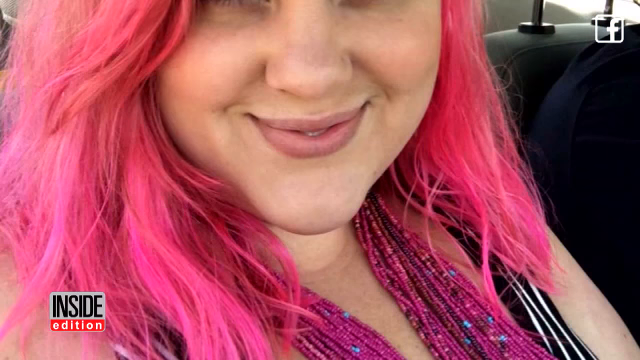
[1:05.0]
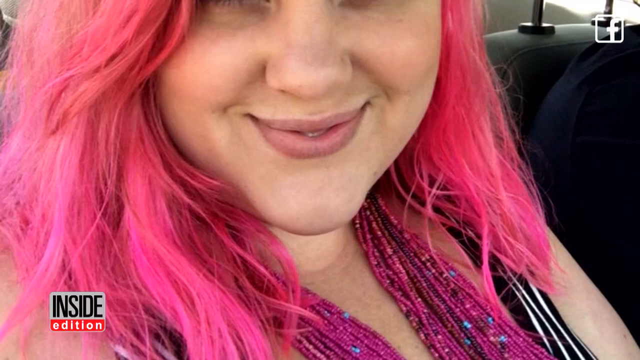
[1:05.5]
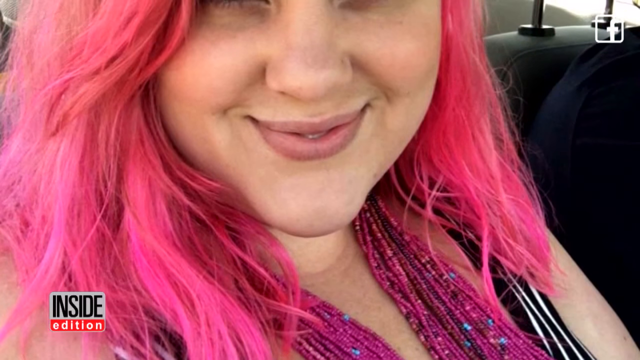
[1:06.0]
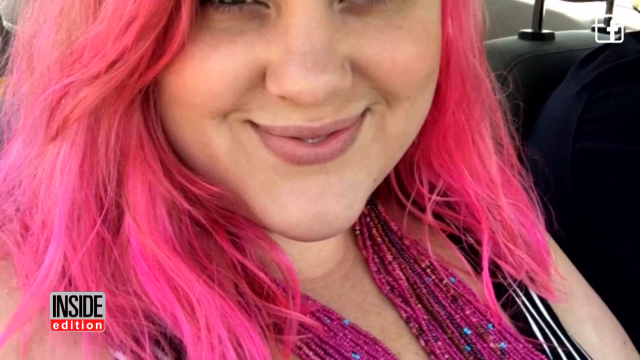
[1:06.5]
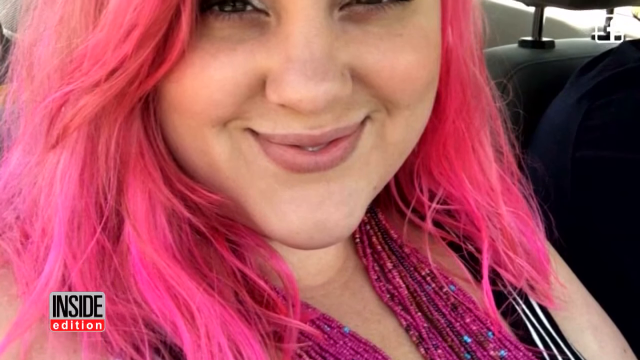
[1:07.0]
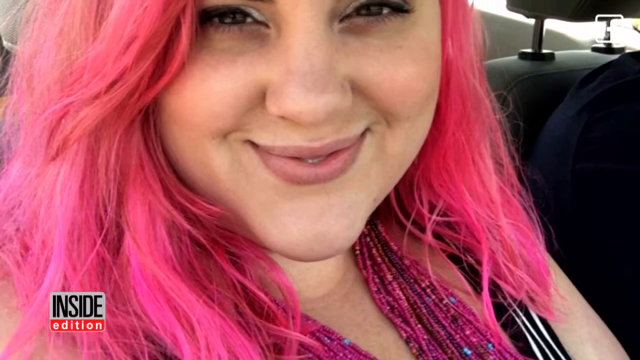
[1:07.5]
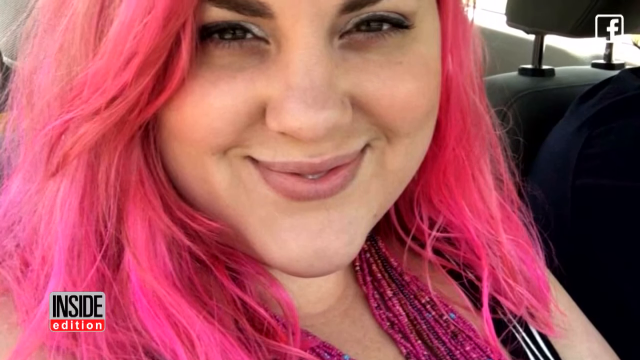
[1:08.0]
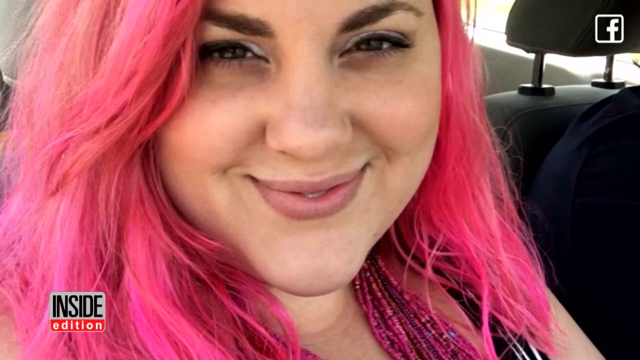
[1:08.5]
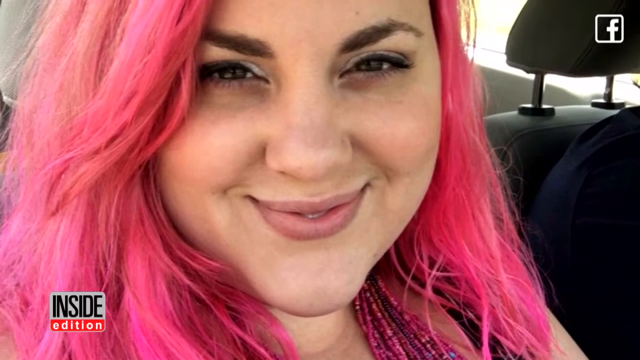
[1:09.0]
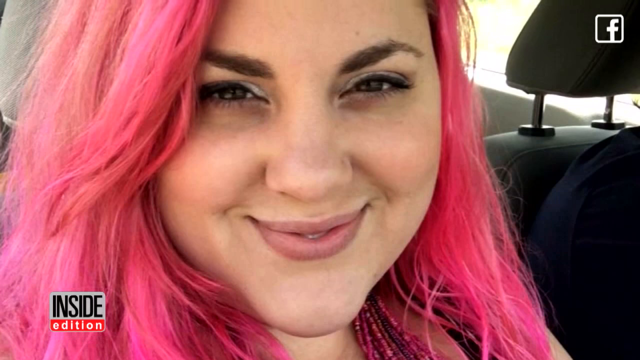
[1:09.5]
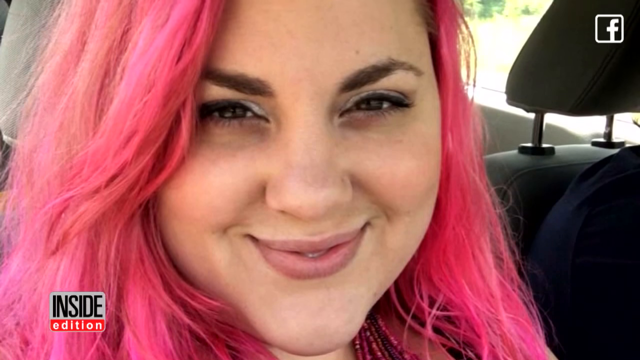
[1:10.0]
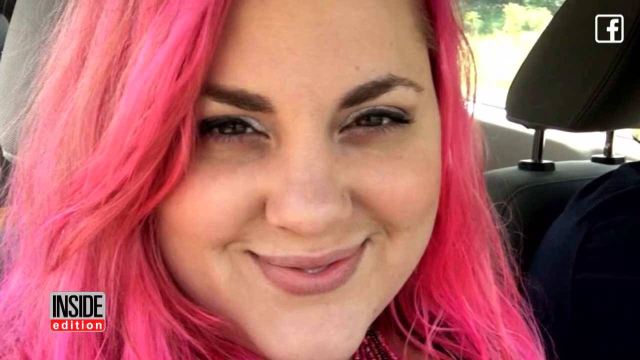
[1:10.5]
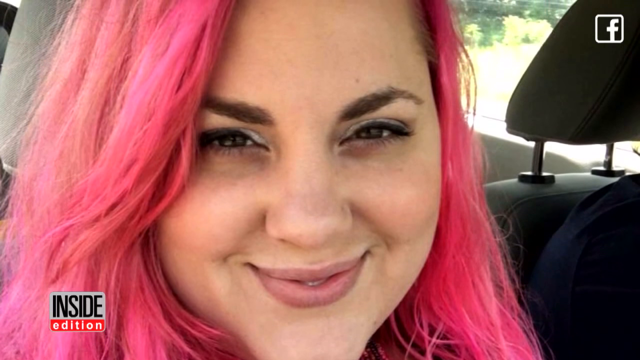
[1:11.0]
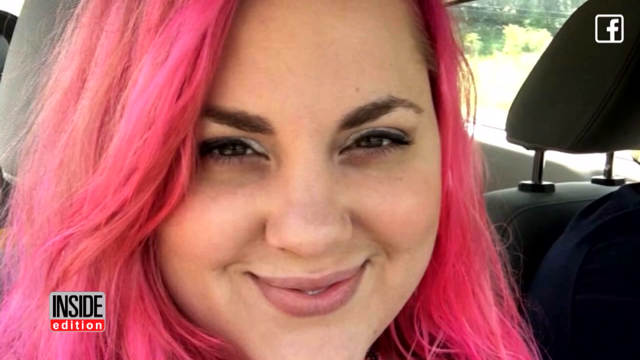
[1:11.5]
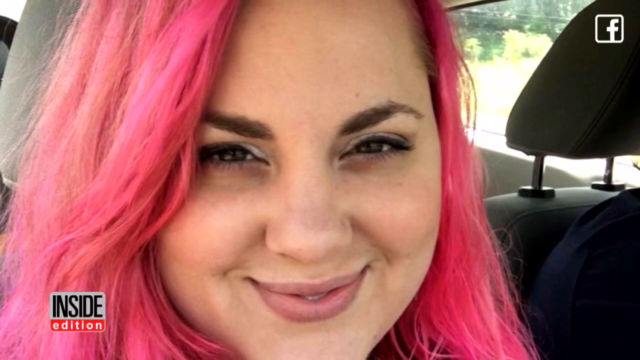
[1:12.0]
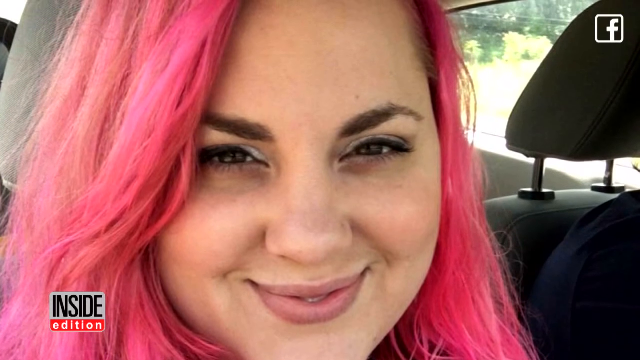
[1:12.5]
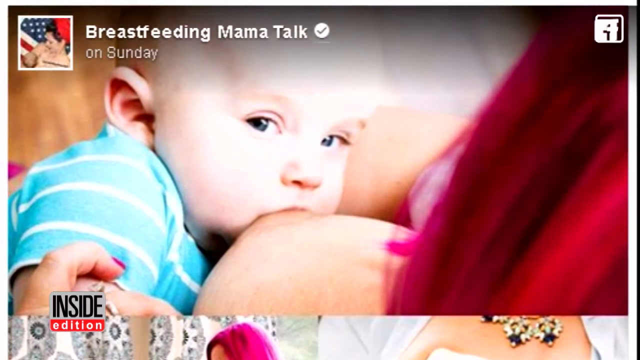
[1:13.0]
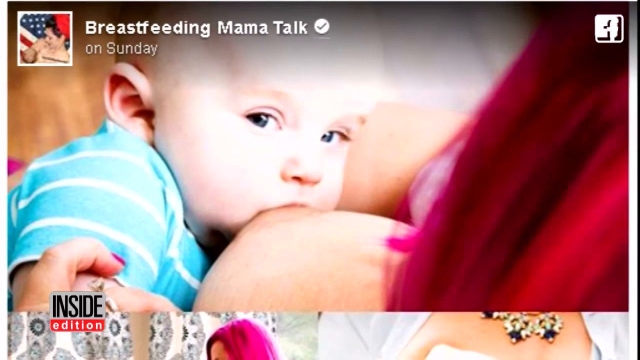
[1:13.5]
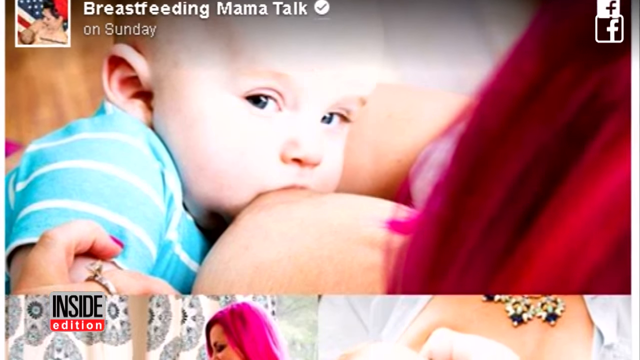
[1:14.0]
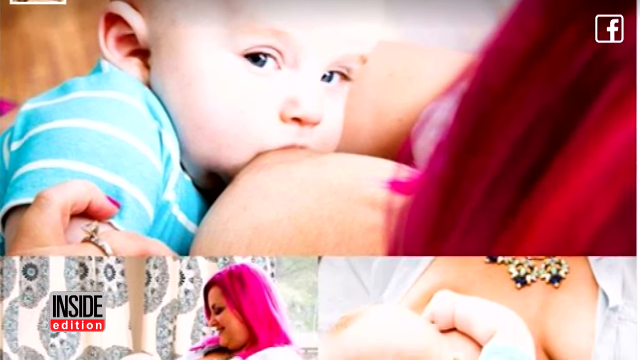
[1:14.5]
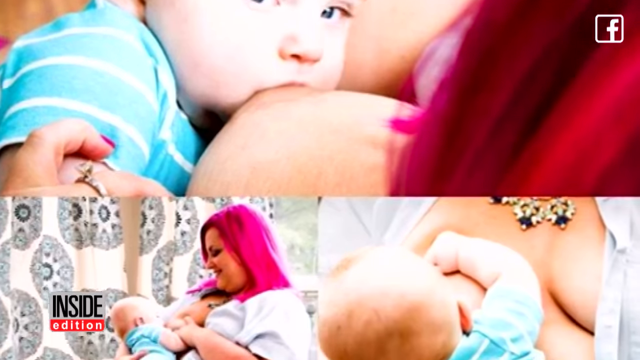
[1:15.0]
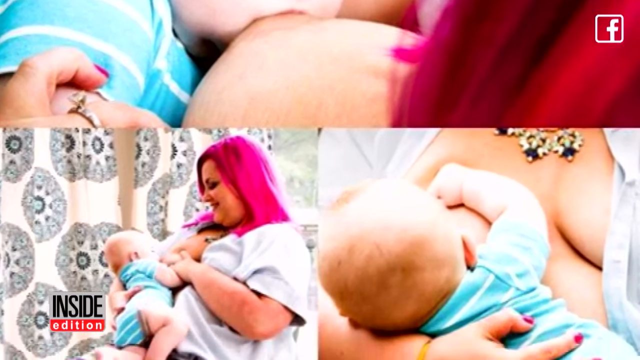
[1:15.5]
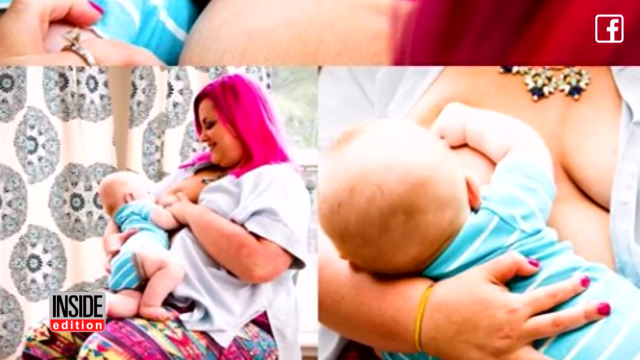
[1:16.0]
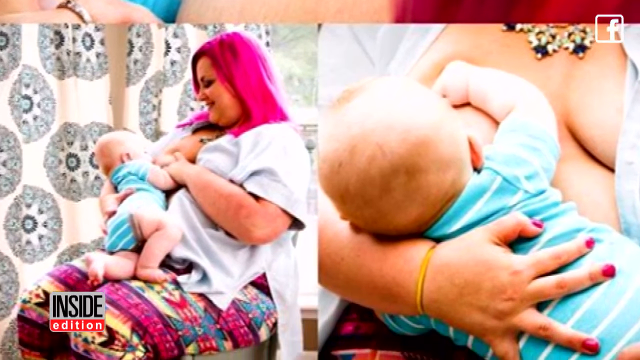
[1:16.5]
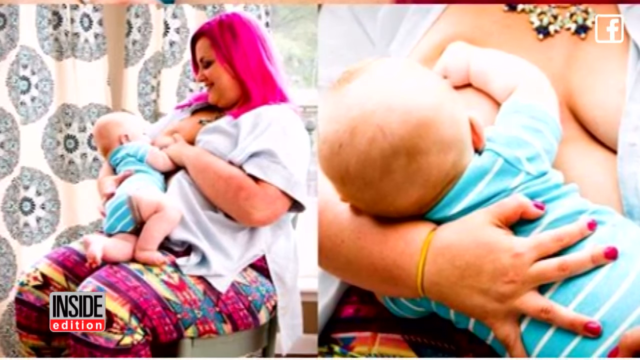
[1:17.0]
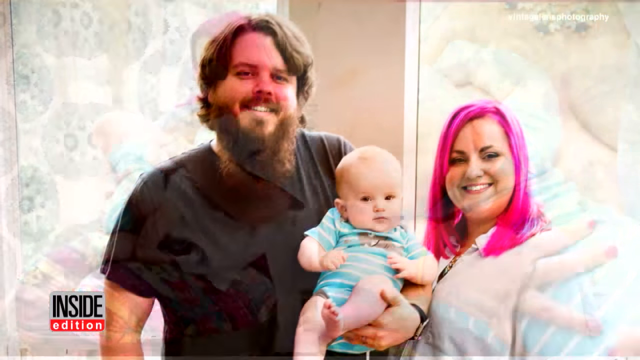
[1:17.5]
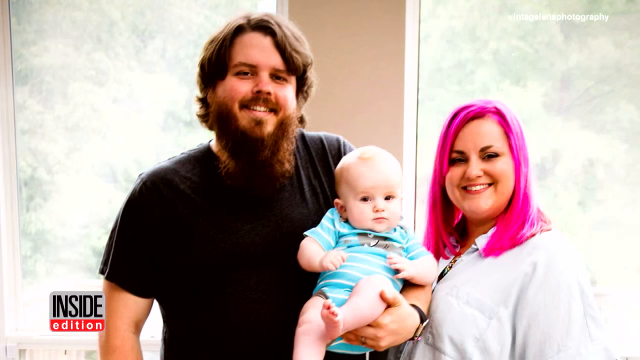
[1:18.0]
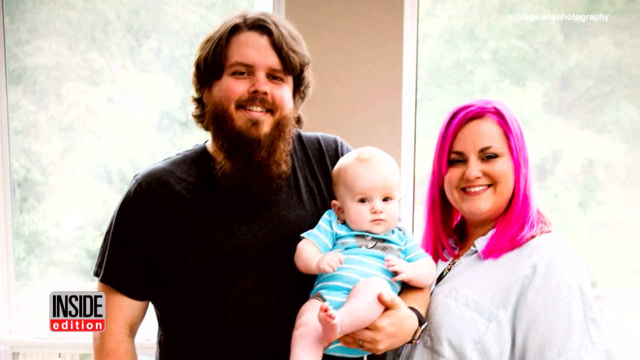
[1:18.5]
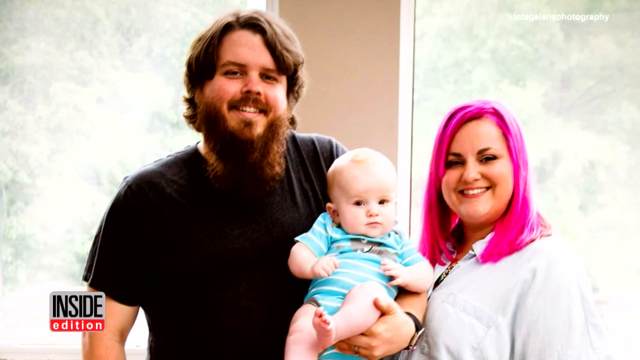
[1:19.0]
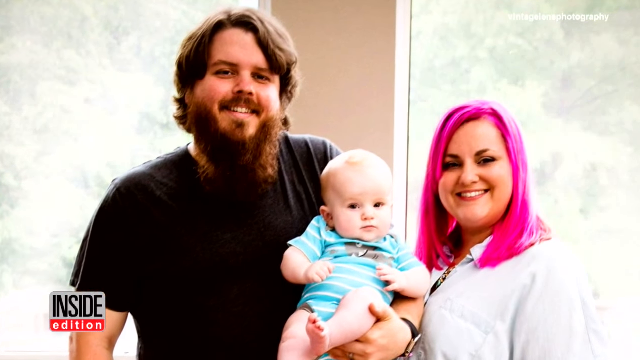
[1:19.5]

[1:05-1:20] A close-up shows the mom, who has bright hot pink hair, sitting in a car and smiling. A picture of her breast follows as she breastfeeds her baby, then a split screen with three pictures of her breastfeeding her child. Next comes a picture of her with her husband, possibly boyfriend, posing; he holds the baby and the woman smiles next to him. He has a beard and brown hair. The video then goes back to the baby breastfeeding in a close-up, with the baby looking at the camera rather than at the breast while continuing to feed. The baby has no hair. A Facebook insignia is in the upper right corner, and text in the lower corner says you can subscribe to Inside Edition.